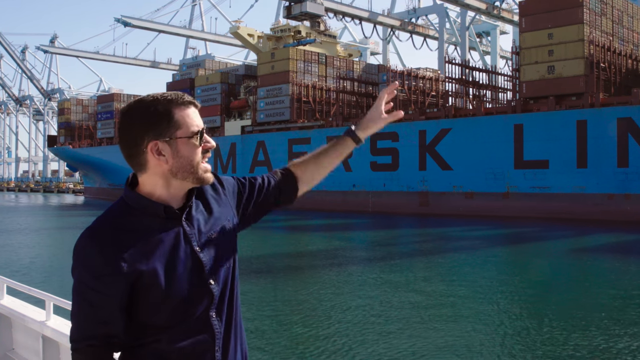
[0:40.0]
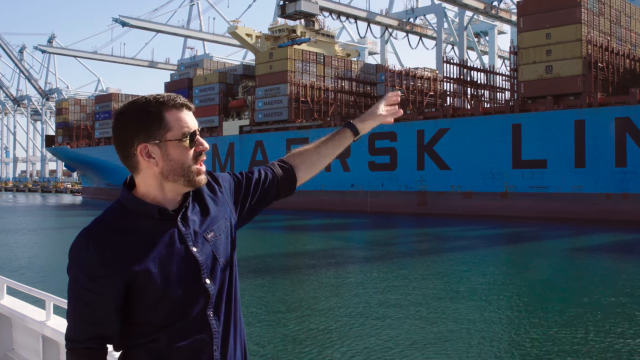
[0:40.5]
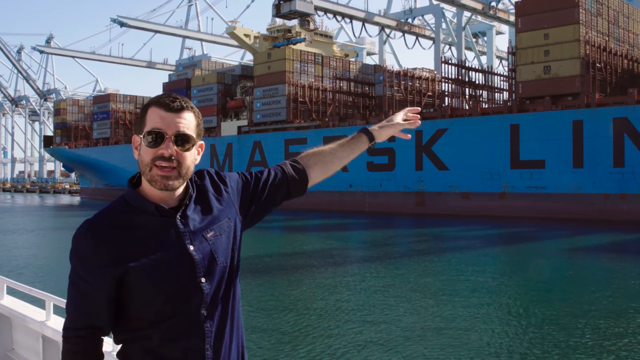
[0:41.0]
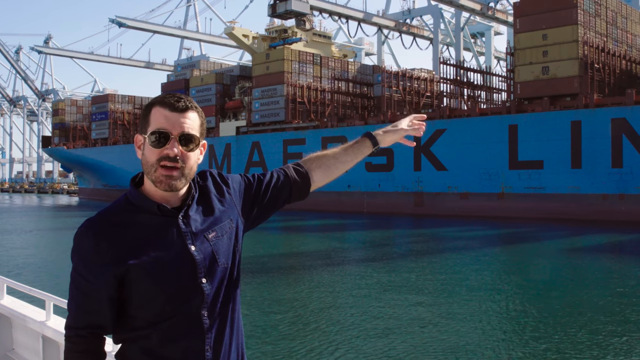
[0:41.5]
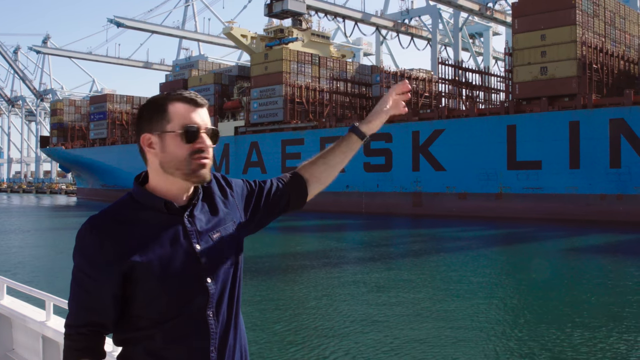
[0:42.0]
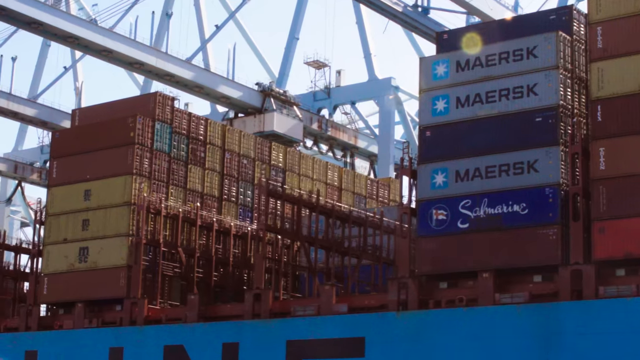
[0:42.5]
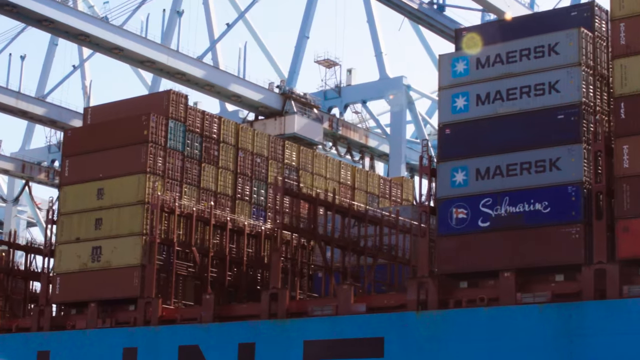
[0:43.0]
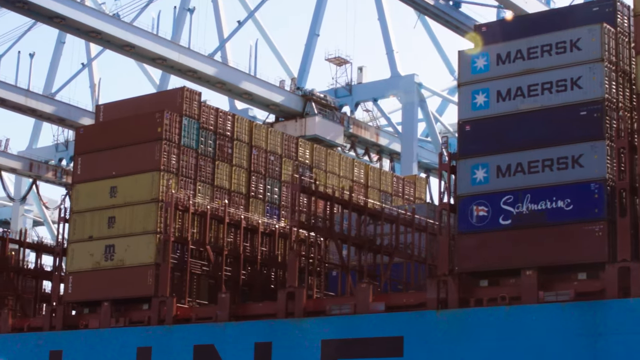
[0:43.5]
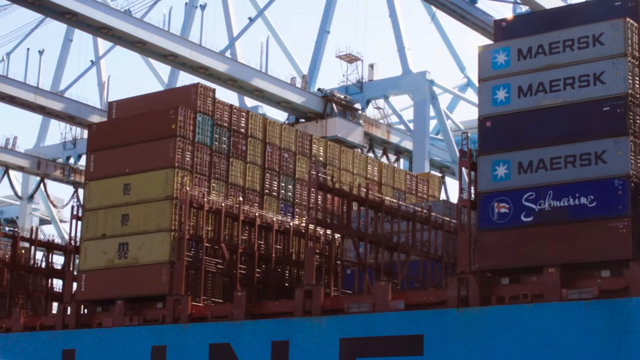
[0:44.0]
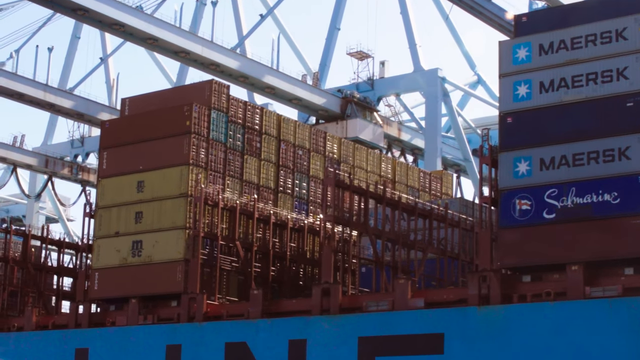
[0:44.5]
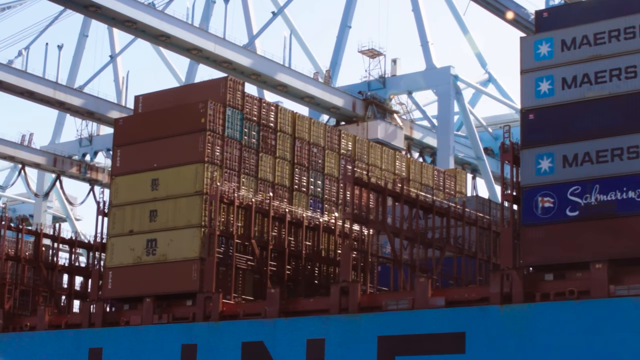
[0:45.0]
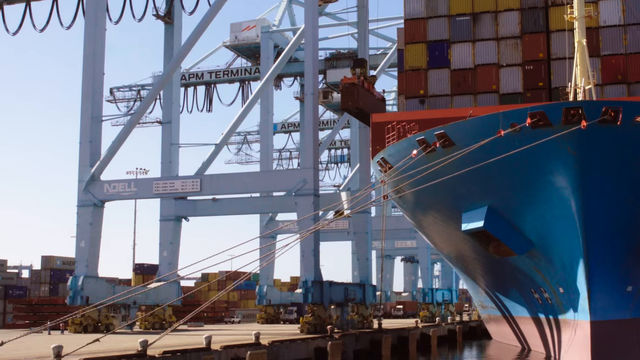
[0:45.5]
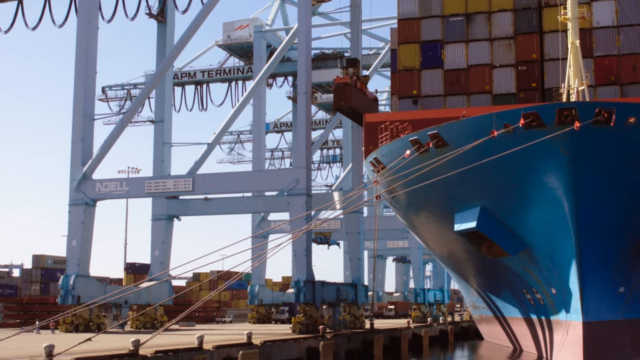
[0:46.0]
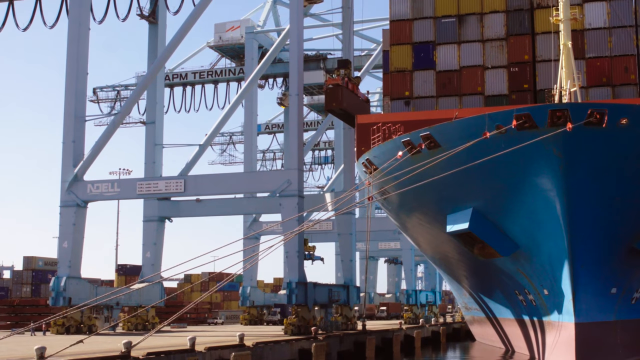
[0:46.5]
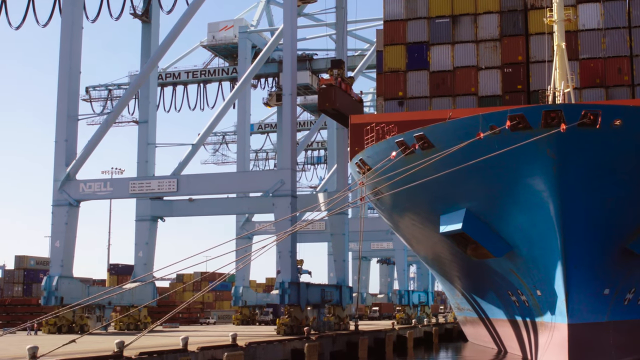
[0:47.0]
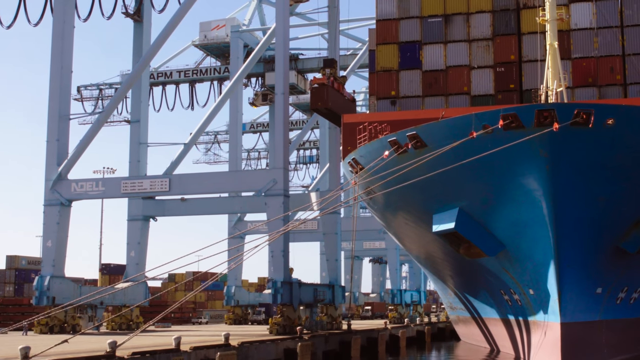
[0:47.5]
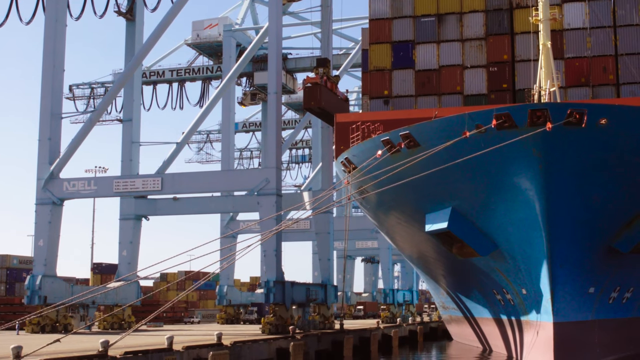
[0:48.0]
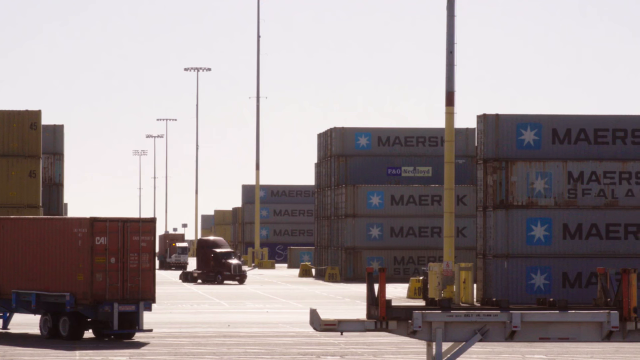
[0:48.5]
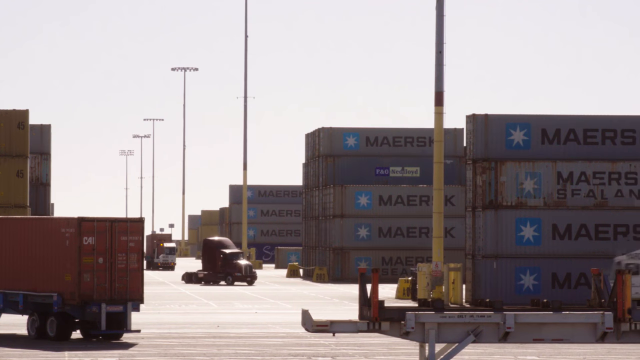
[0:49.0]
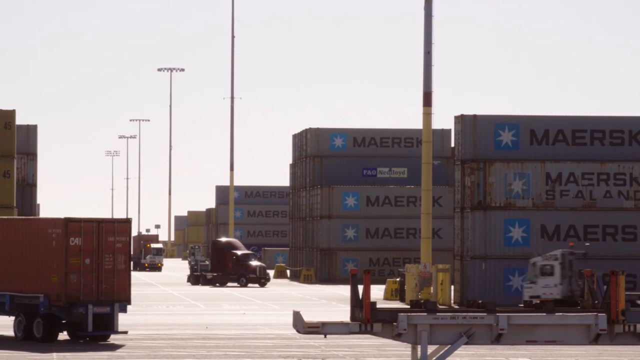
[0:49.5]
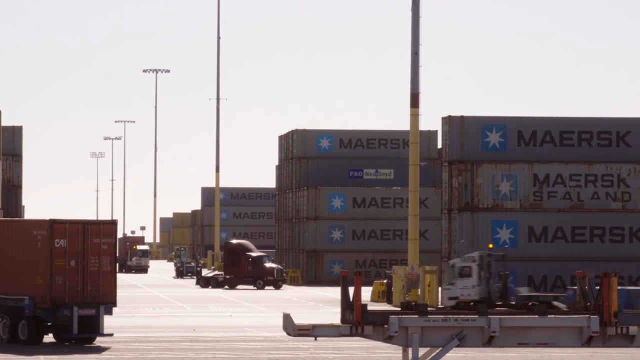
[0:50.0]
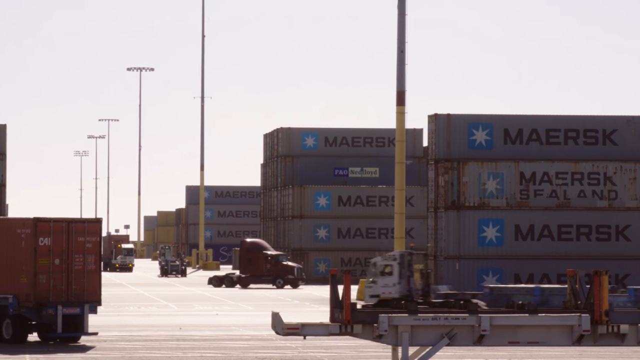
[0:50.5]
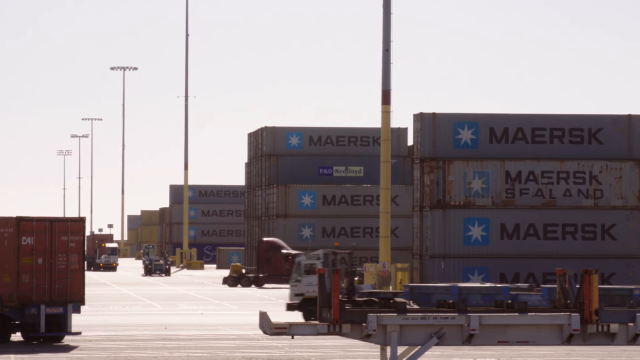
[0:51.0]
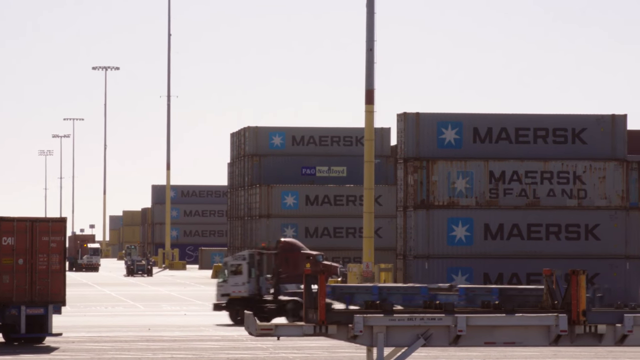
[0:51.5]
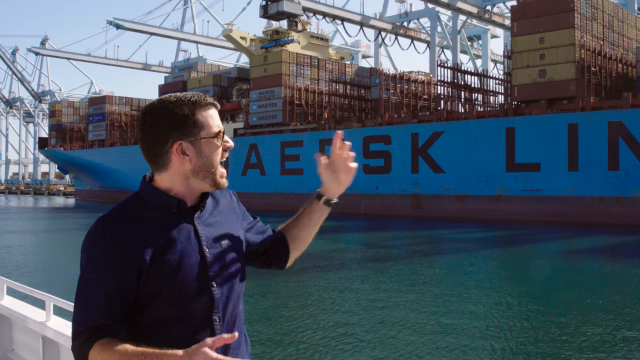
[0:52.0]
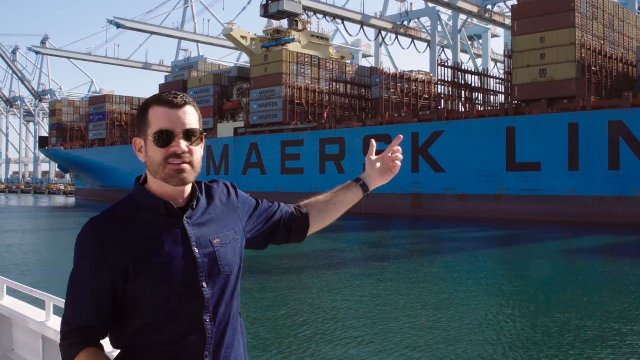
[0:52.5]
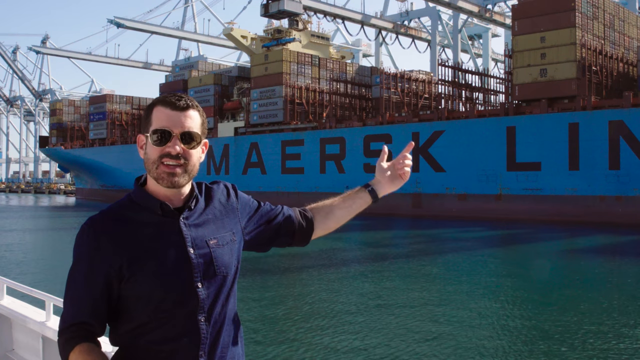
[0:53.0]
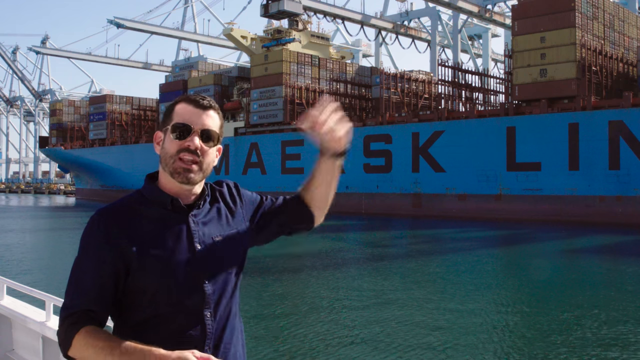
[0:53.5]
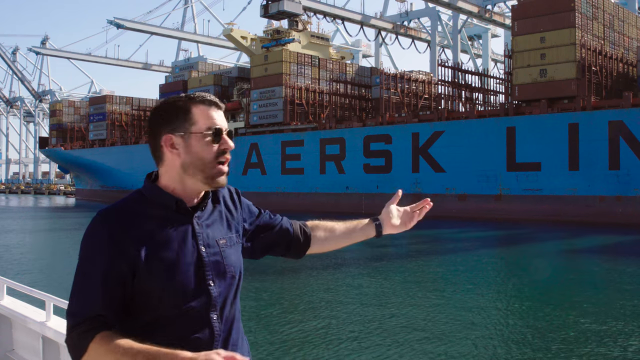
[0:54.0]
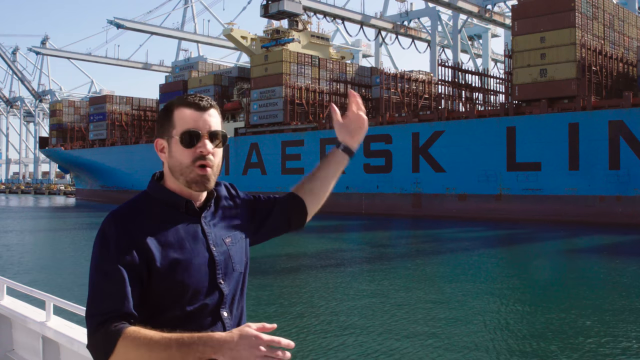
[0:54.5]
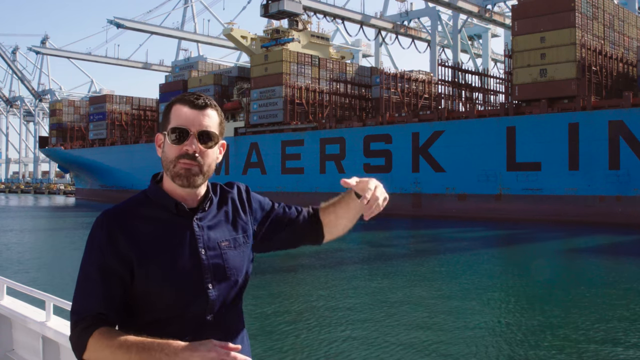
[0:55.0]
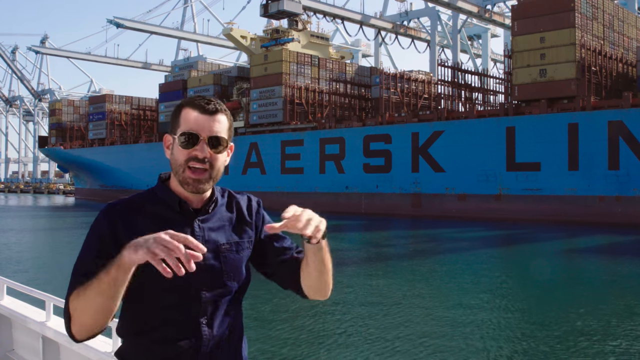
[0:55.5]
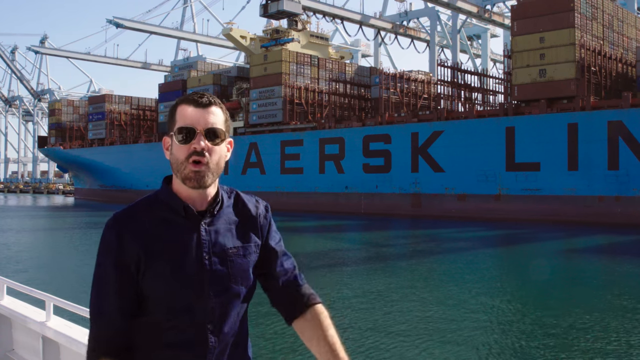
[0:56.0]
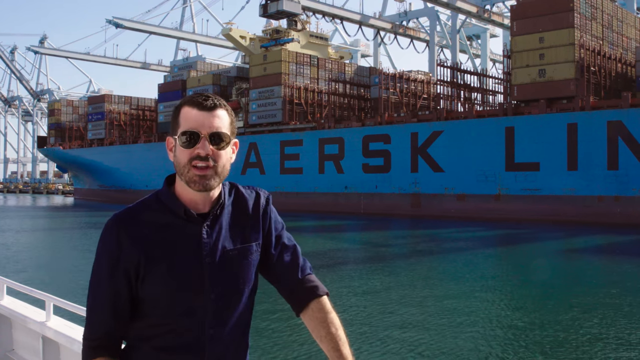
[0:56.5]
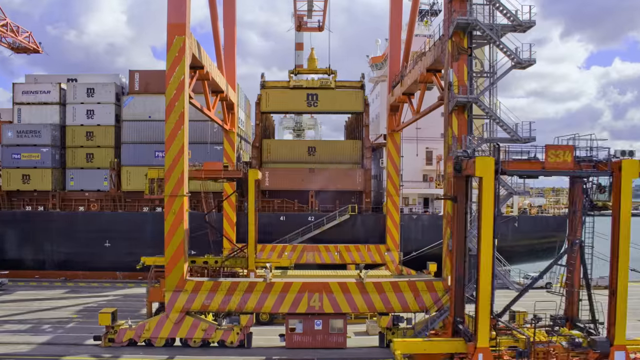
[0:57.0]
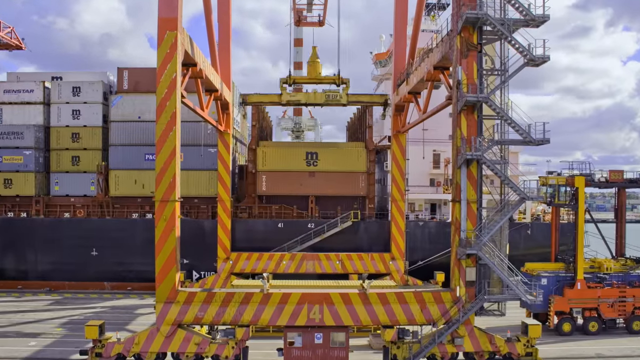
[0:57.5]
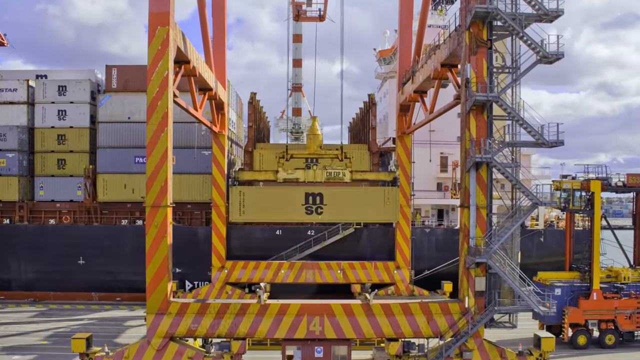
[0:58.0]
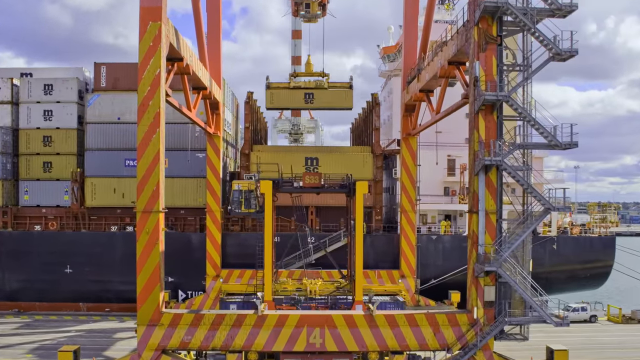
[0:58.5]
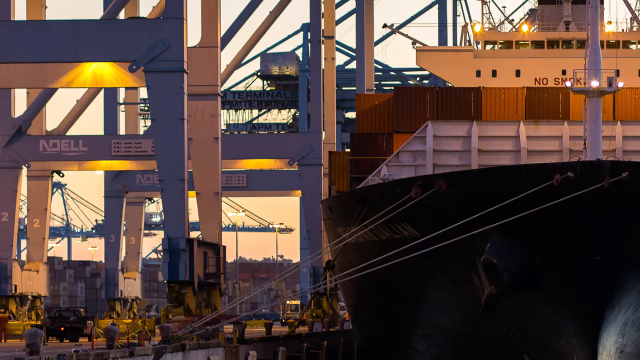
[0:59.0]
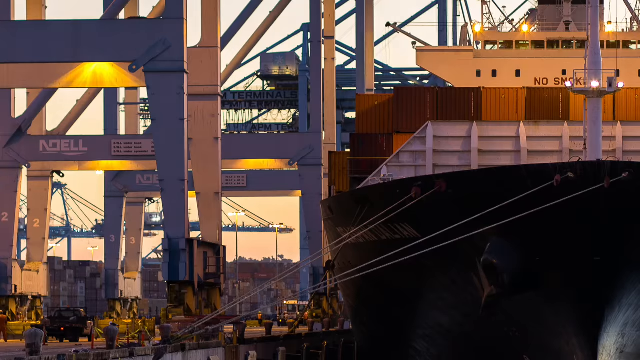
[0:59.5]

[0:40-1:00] Jack Stewart continues to gesture at the boat with his left arm; he turns to look at the boat as he talks, then turns back to the camera. The camera is zoomed in very close to the containers on top of the ship, and above the ship parts of the crane are visible, with the piece that picks up the containers moving out over the ship. The front of the blue ship appears, with several large ropes or metal cables tying the boat to the dock. Several containers are stacked on the ground about four or five high, and big rig trucks drive around below them; the trucks carry no containers, just the cabs driving around. The man is shown talking again, with an expanse of ocean water between him and the boat. Another crane picks up containers and puts them on the ship, stacking them neatly and closely together.